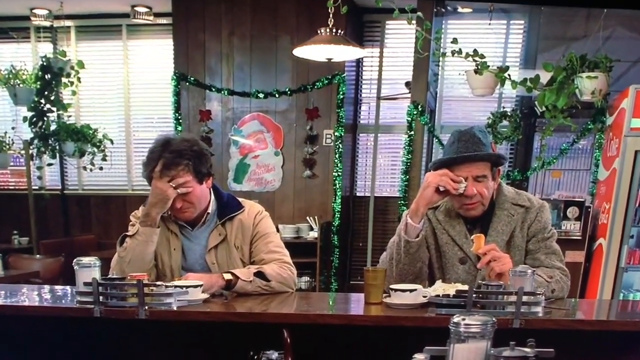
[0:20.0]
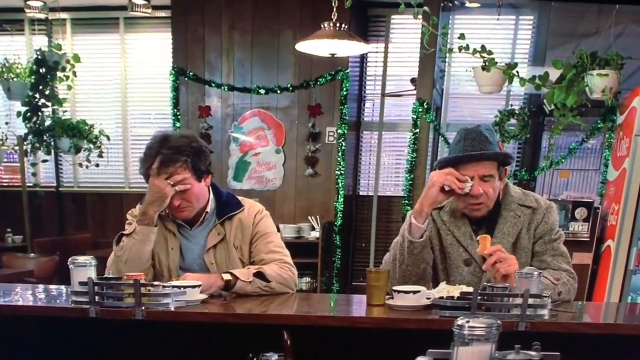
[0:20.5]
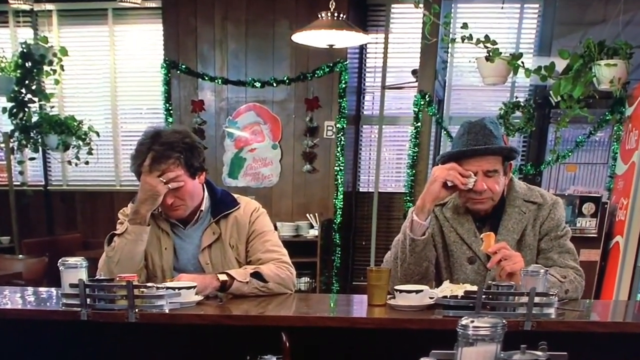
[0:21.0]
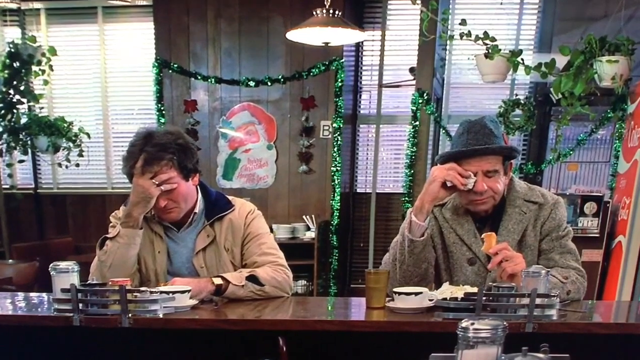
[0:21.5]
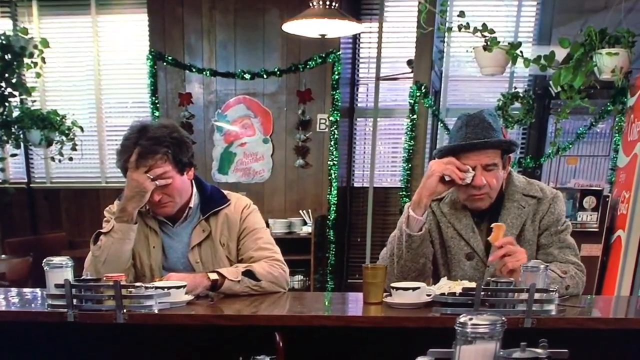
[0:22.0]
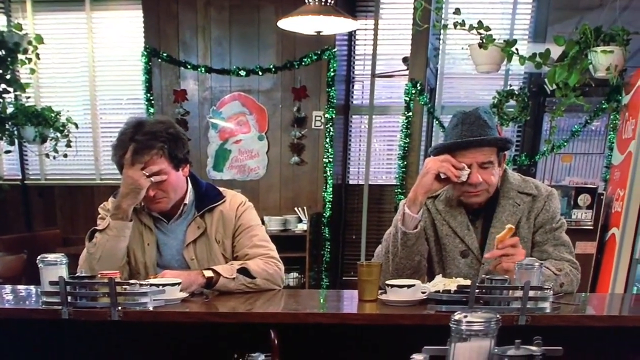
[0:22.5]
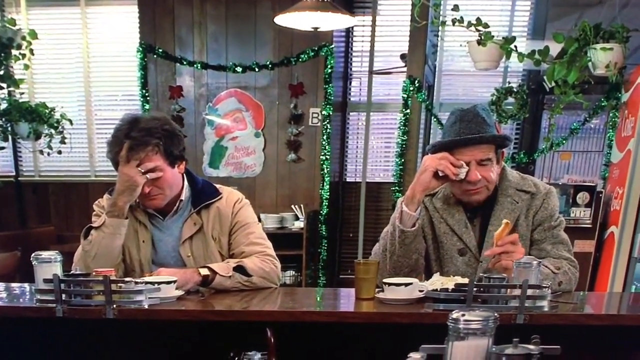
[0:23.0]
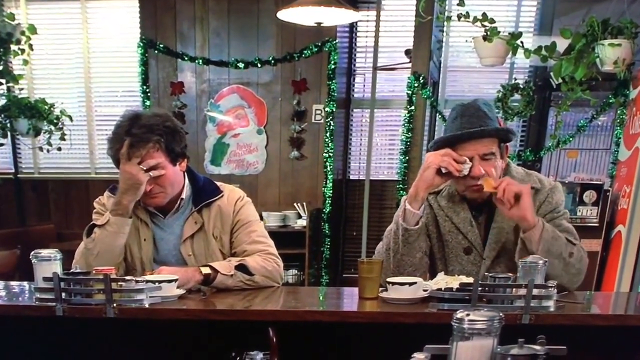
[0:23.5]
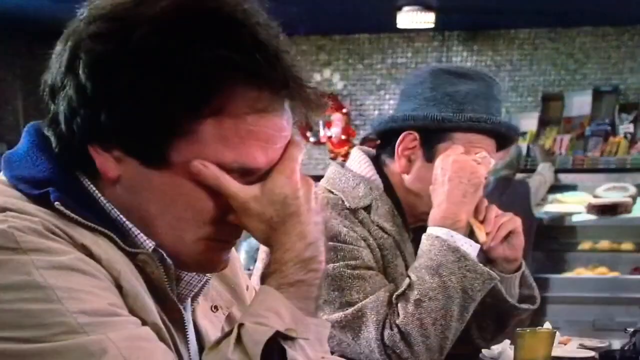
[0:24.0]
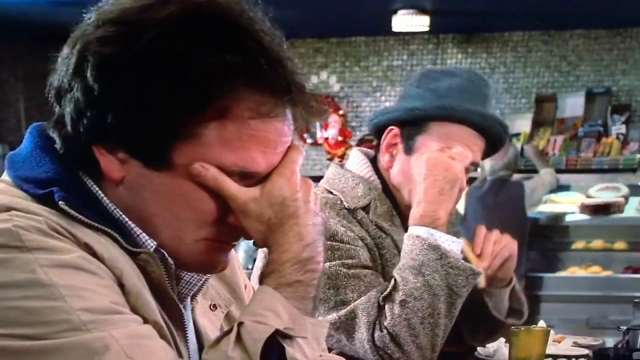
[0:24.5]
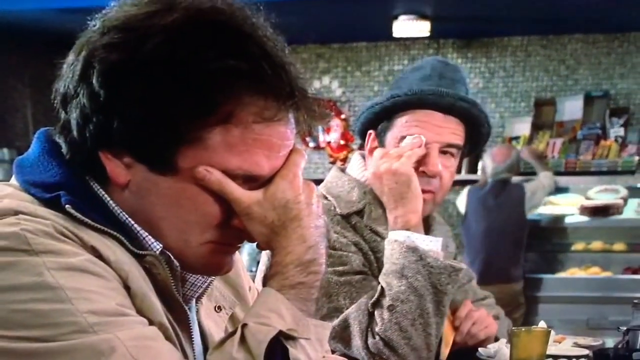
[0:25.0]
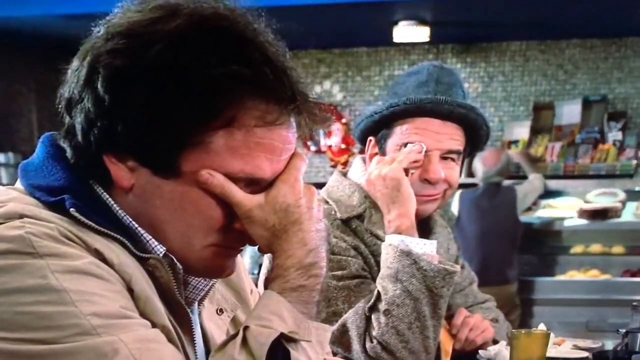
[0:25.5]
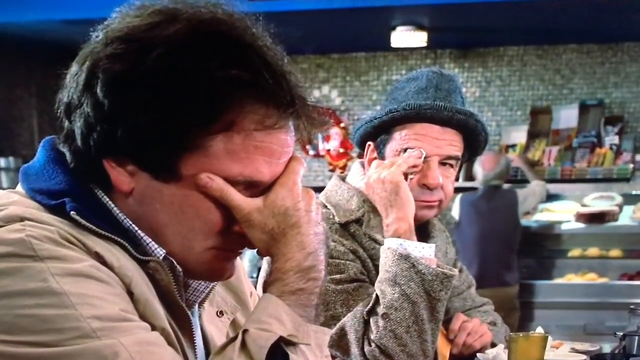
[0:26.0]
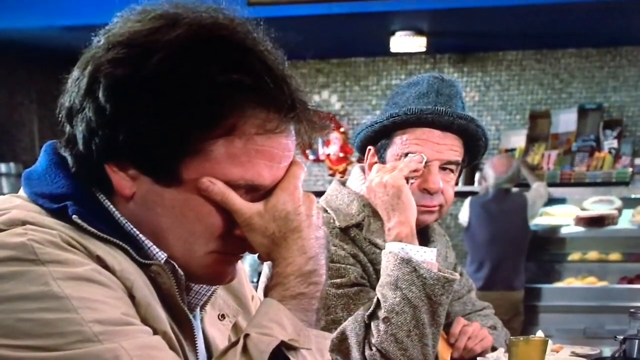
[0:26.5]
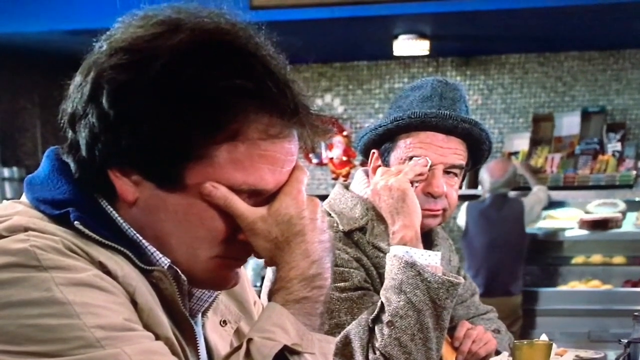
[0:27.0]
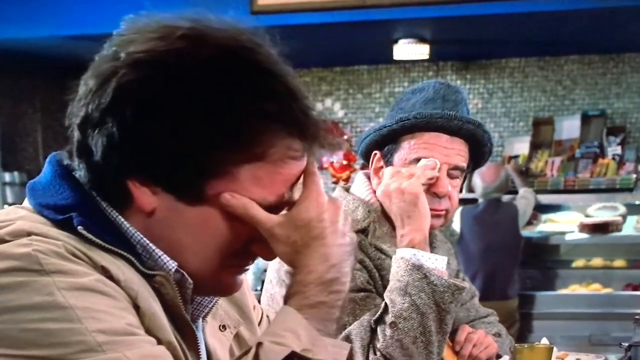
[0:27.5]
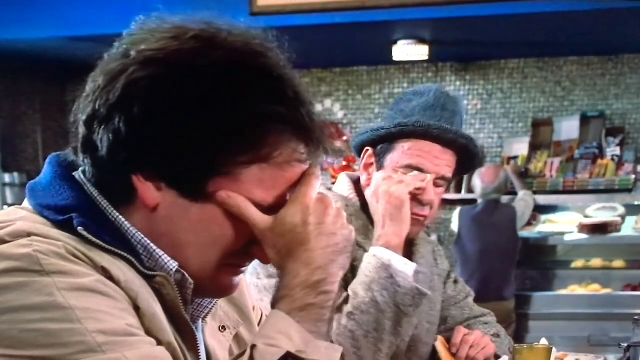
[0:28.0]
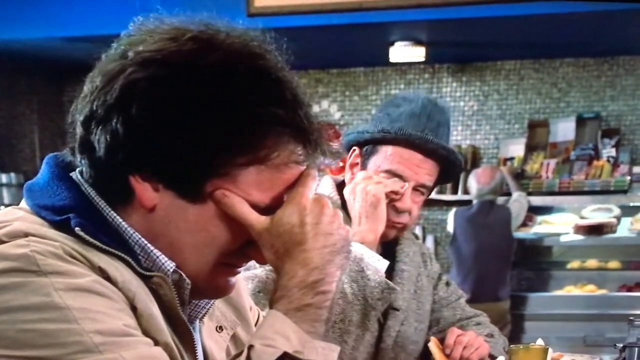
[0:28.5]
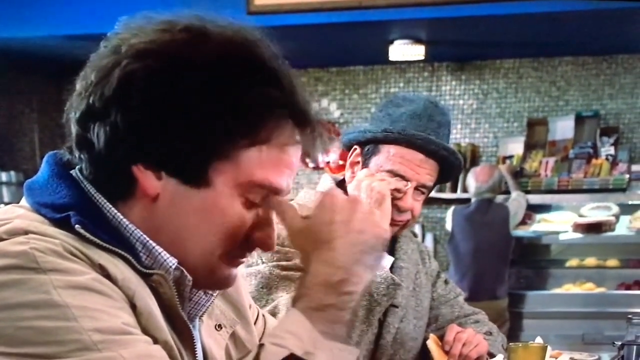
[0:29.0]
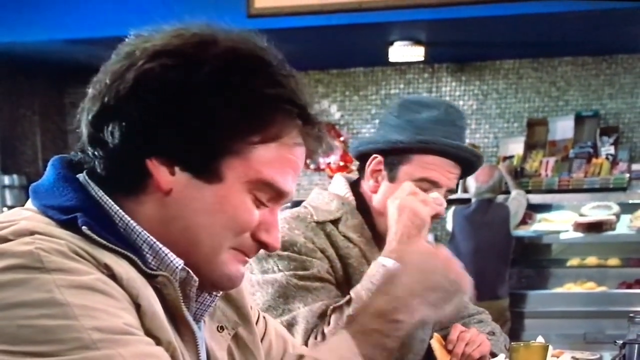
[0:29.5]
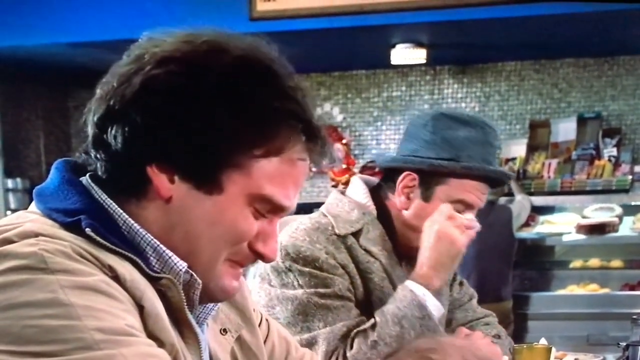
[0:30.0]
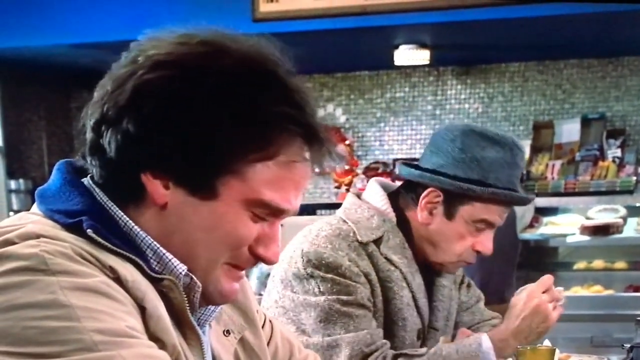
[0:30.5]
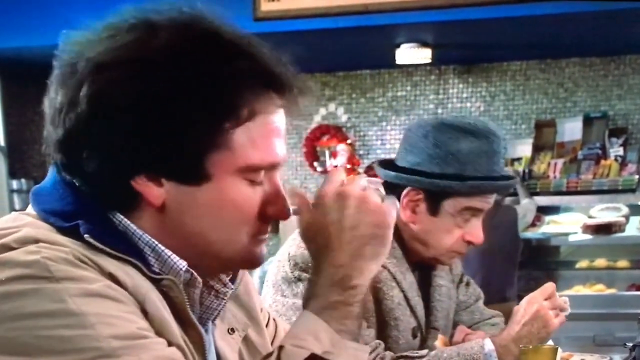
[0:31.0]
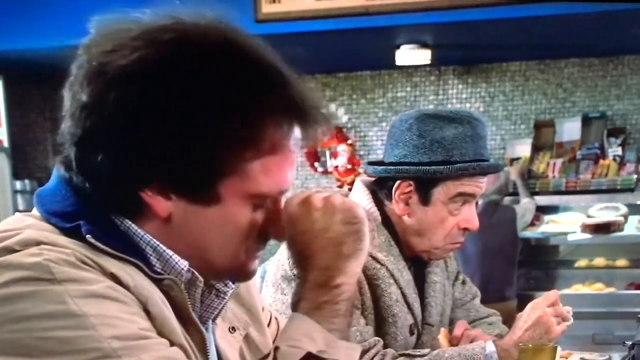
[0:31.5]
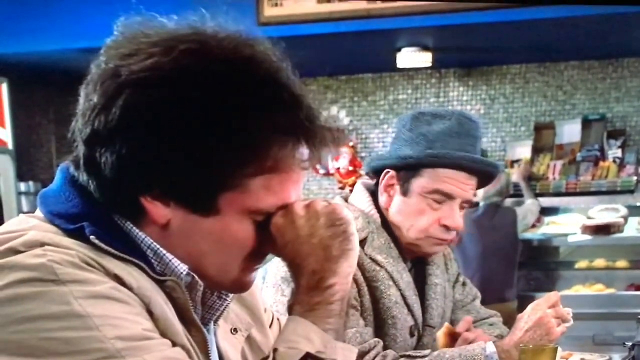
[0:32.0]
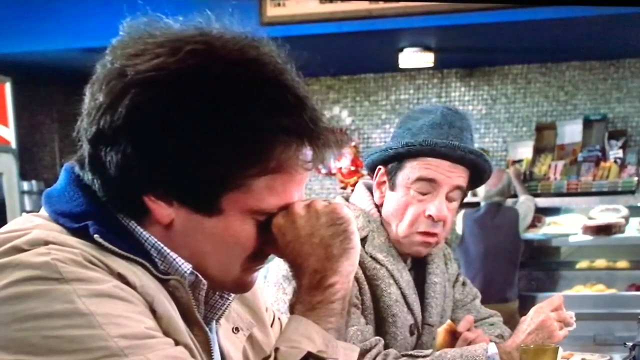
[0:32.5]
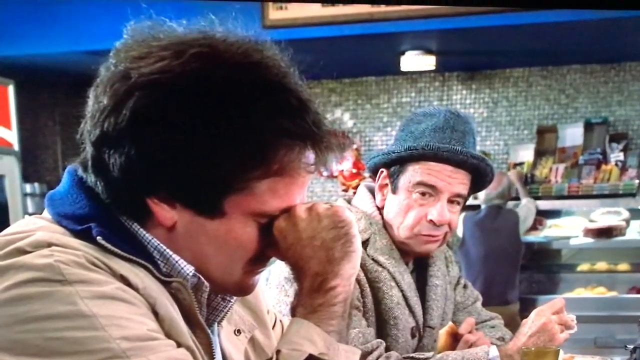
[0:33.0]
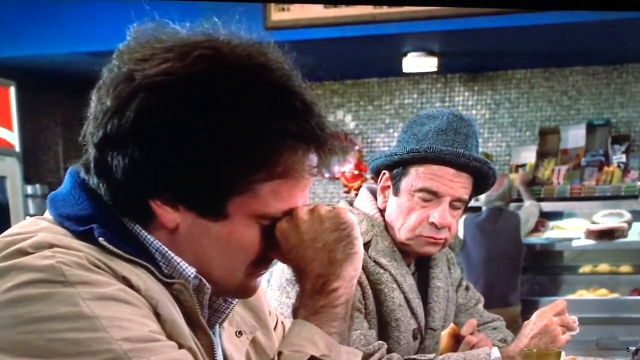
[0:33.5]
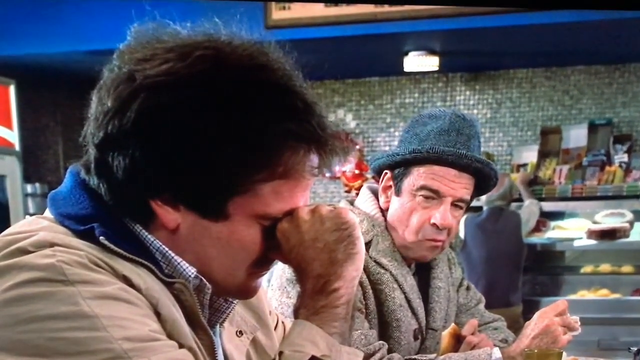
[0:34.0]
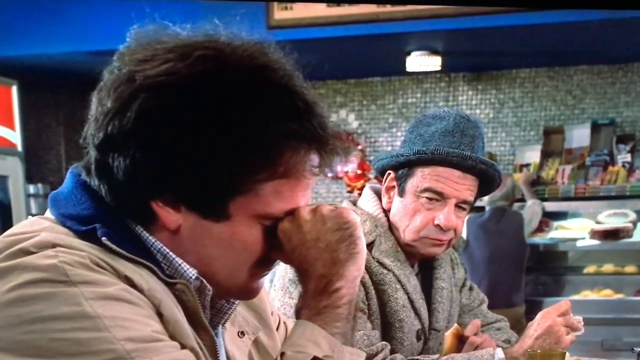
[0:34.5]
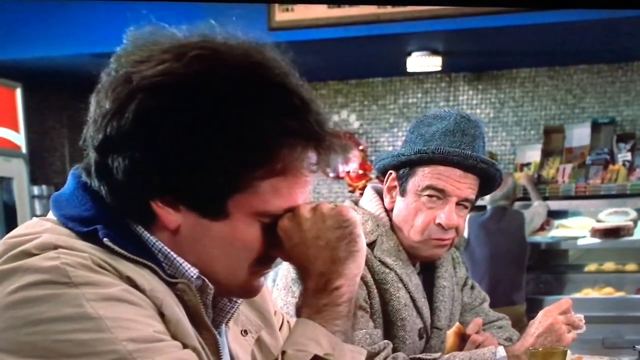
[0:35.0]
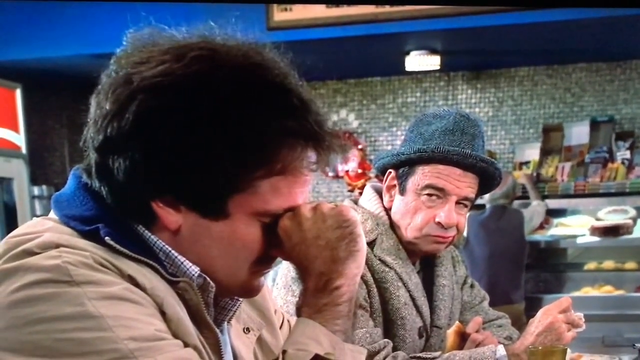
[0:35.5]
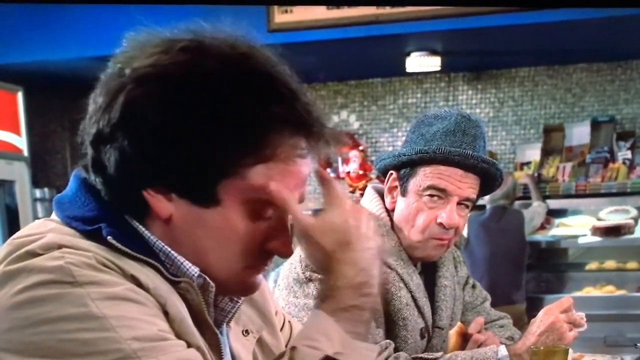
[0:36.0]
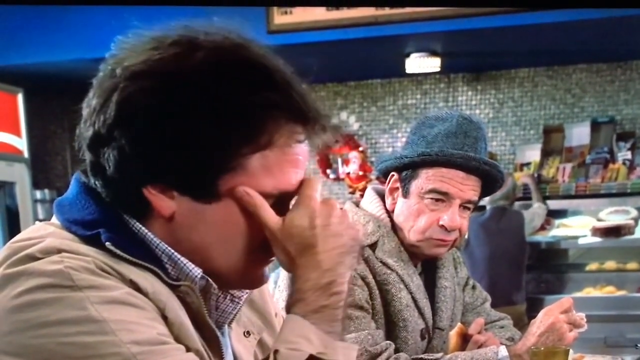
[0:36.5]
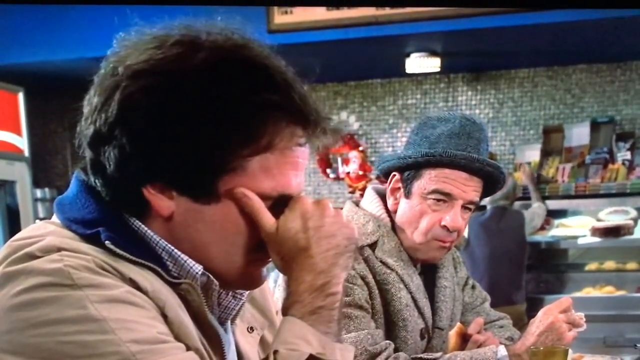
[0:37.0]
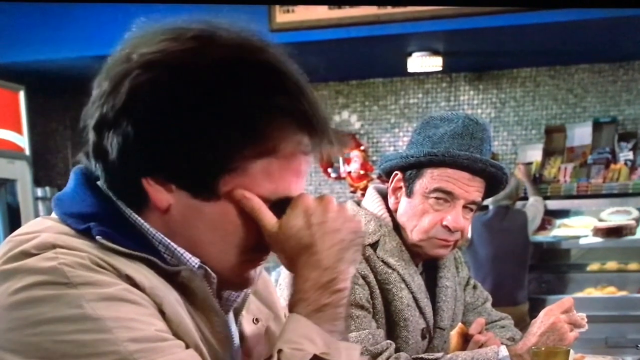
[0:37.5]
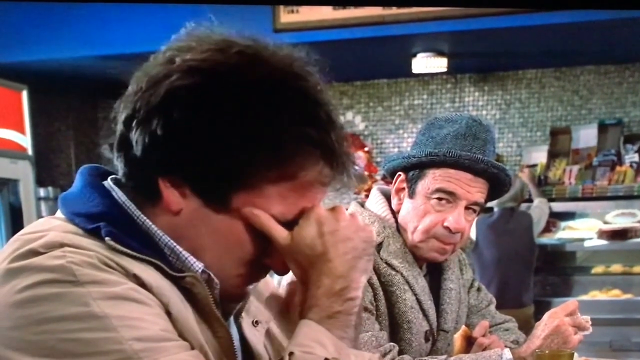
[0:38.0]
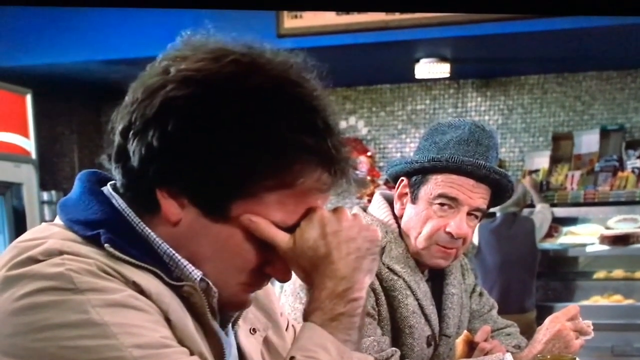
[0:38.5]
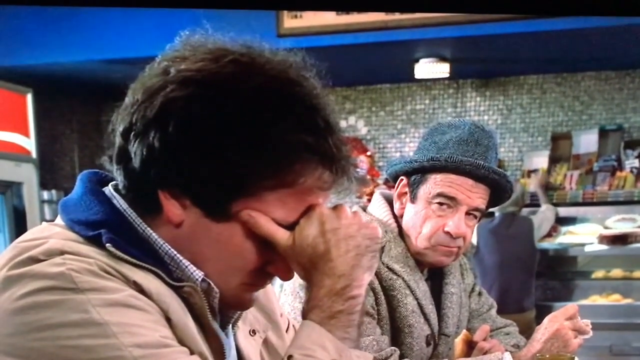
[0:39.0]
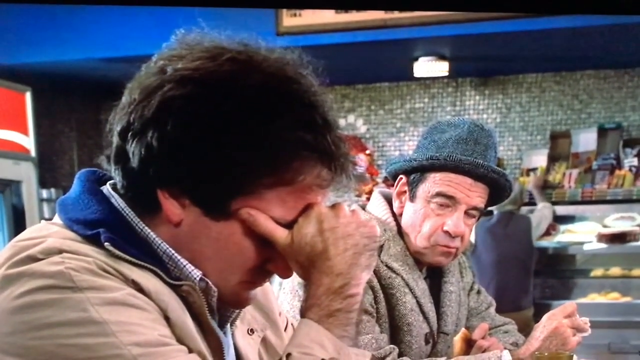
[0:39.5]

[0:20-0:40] The shot changes from the wide shot to a close-up of the man who was not eating. In the background, the man who was drinking his coffee looks at him with a concerned expression. The man closest to the camera grimaces as if he is about to cry and moves his hands a bit, but he does not really acknowledge the other man's presence. Both are wearing warm layers. The man in the background has a tissue; he dabs it and lowers his hand, and he is seen blinking and making some faces. He apparently looks back and forth between the other man and his food.